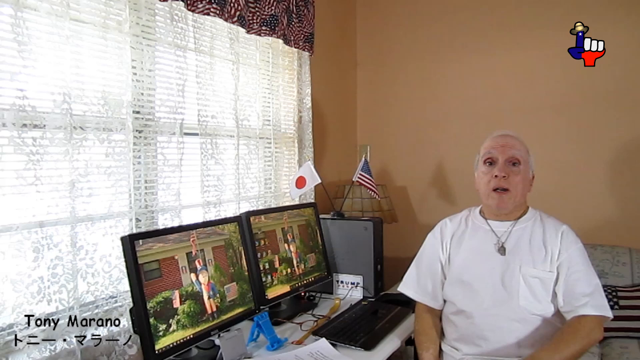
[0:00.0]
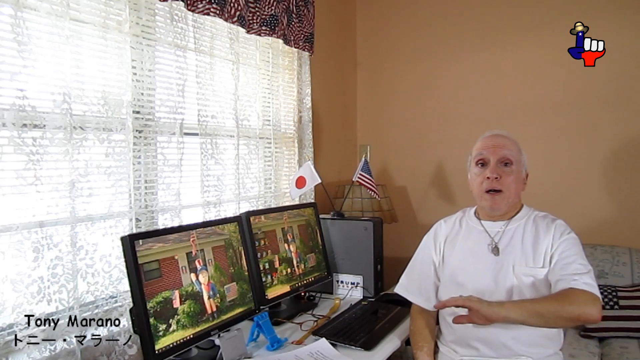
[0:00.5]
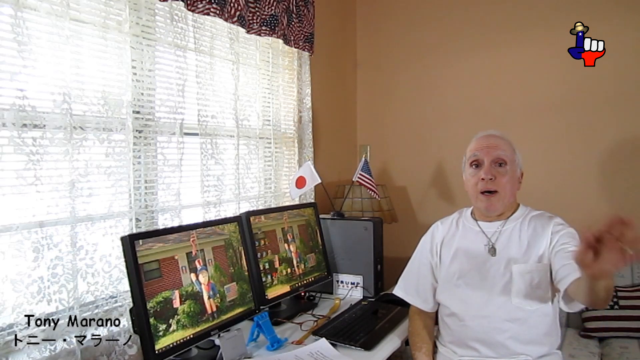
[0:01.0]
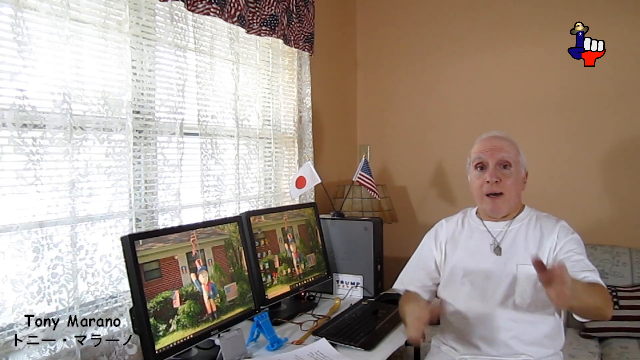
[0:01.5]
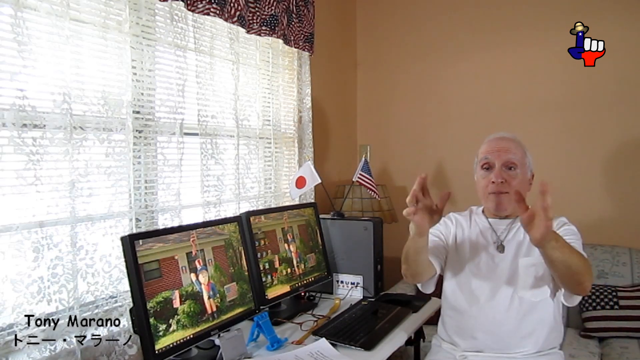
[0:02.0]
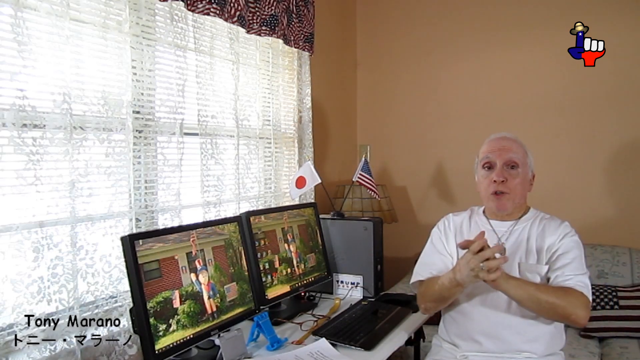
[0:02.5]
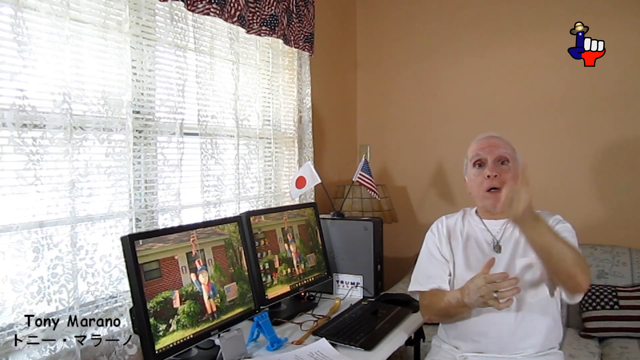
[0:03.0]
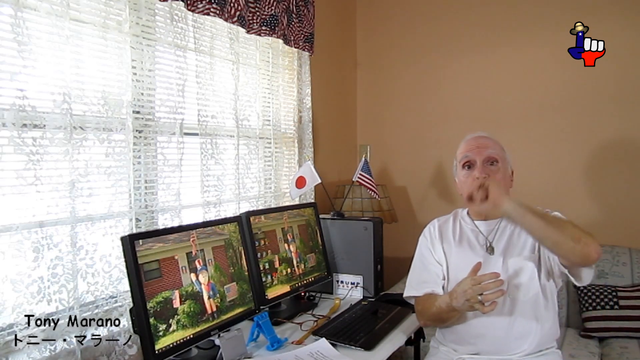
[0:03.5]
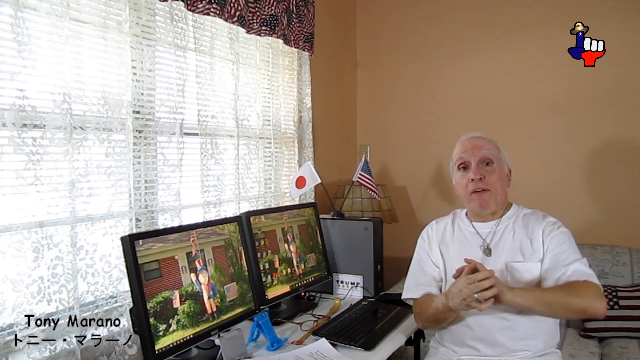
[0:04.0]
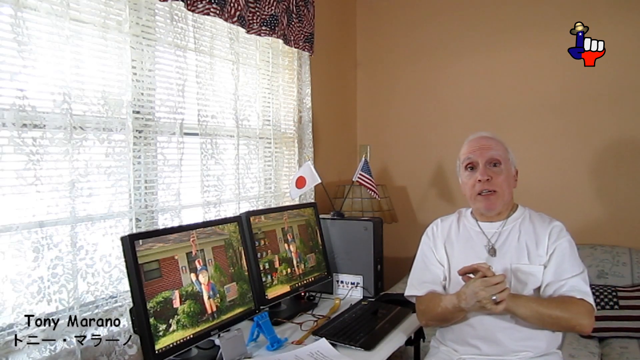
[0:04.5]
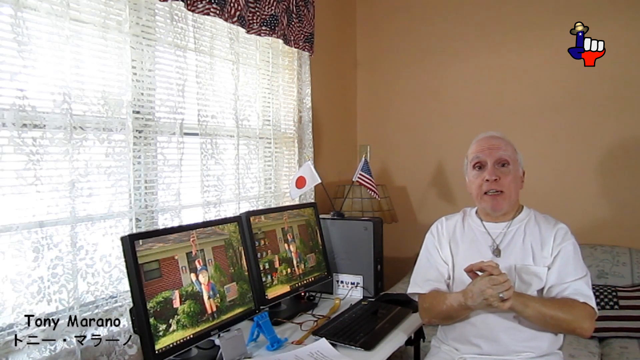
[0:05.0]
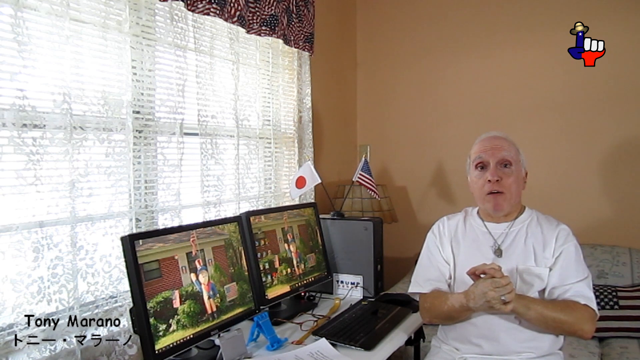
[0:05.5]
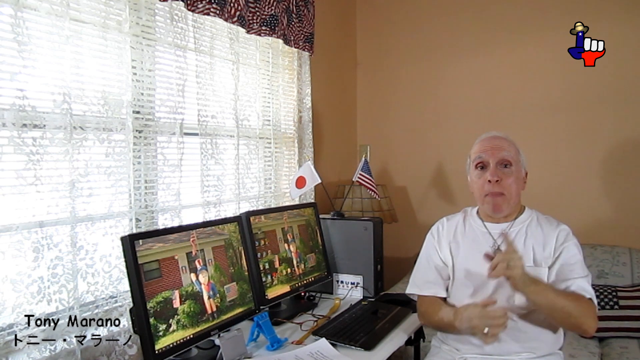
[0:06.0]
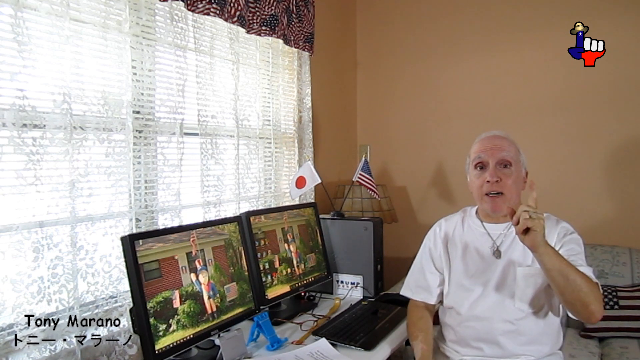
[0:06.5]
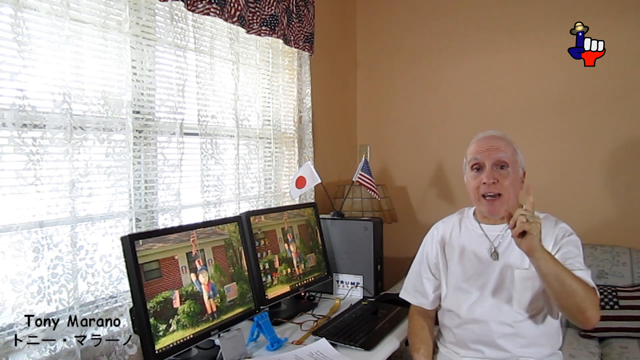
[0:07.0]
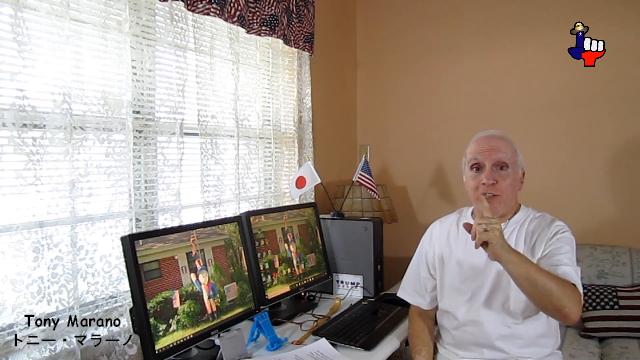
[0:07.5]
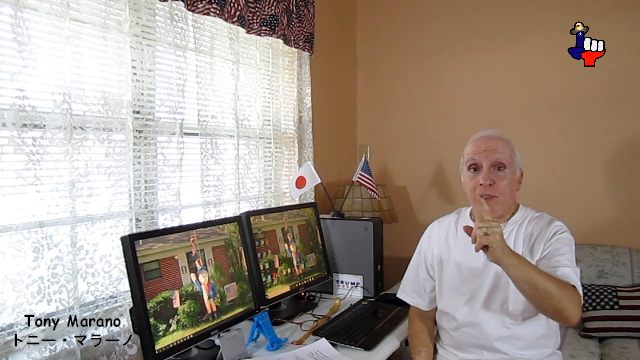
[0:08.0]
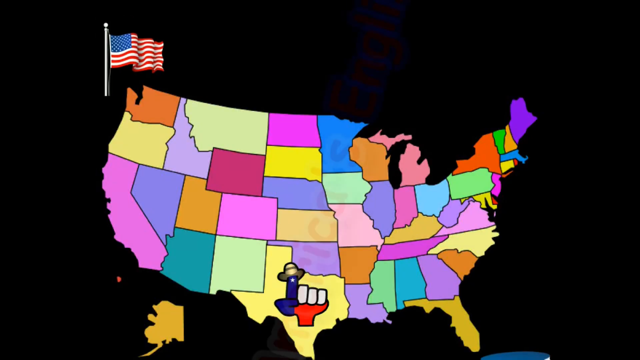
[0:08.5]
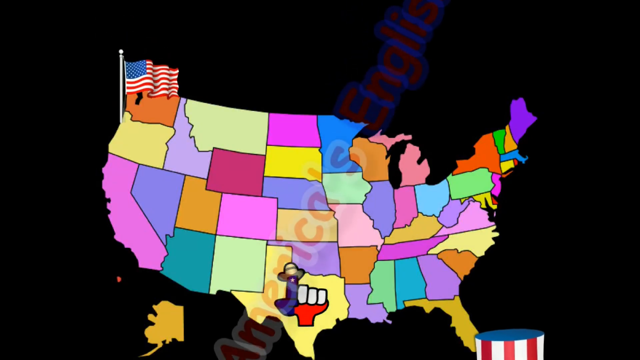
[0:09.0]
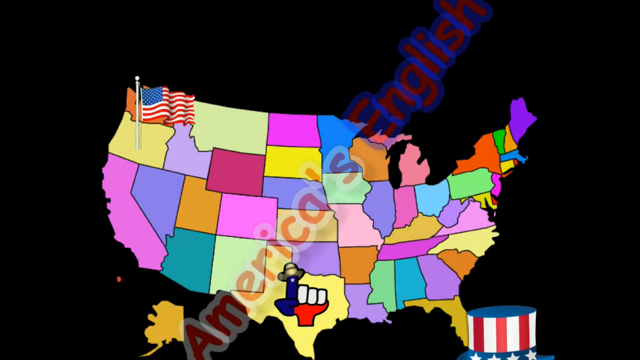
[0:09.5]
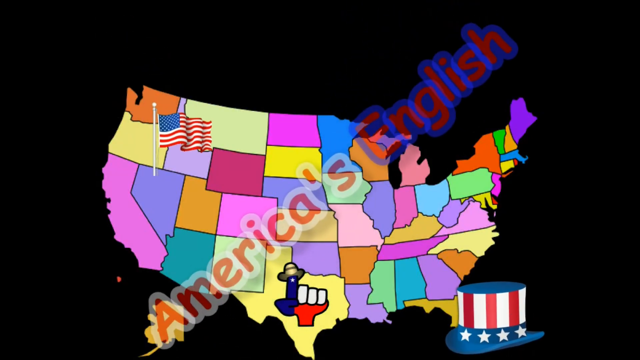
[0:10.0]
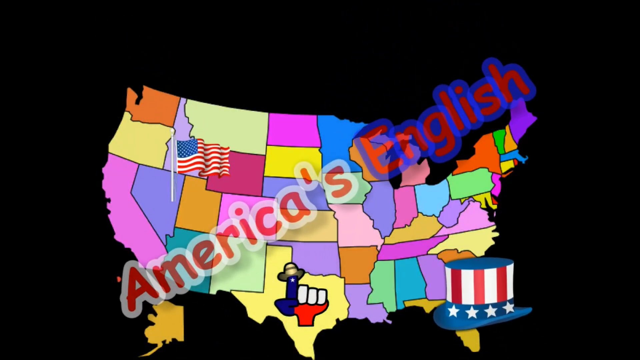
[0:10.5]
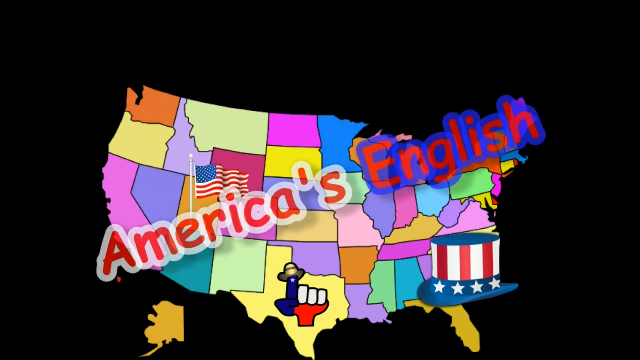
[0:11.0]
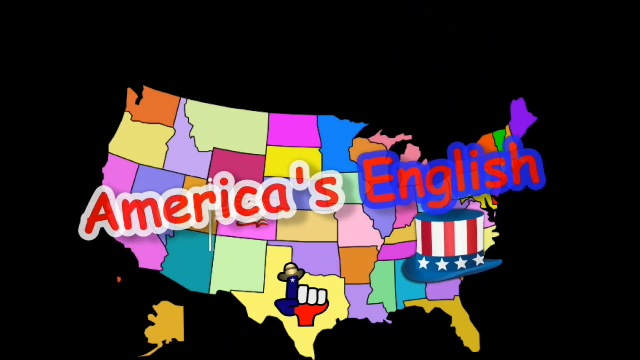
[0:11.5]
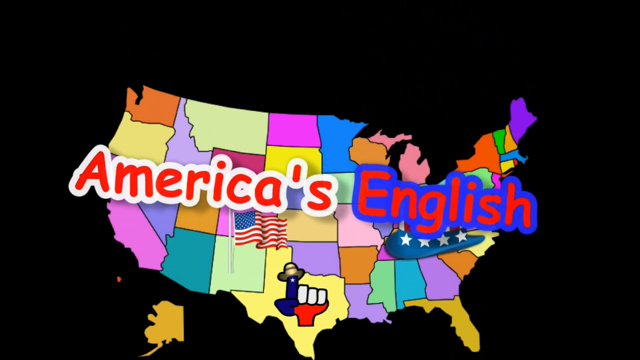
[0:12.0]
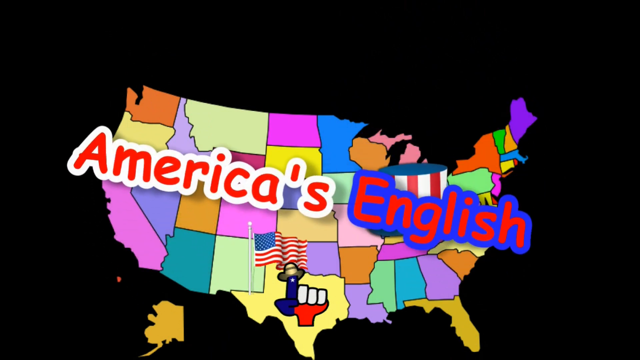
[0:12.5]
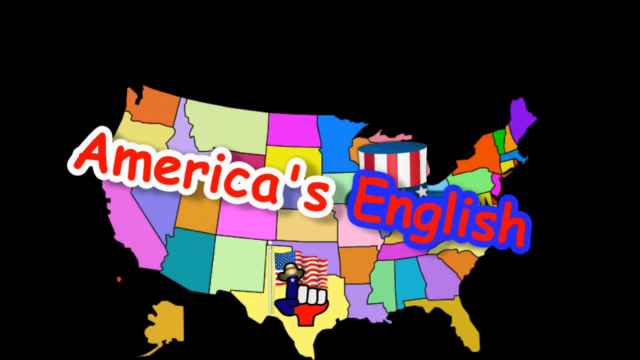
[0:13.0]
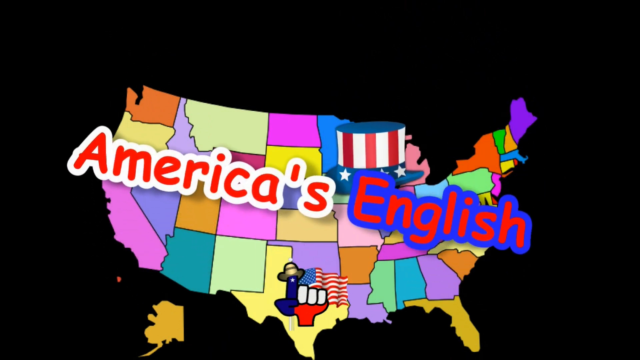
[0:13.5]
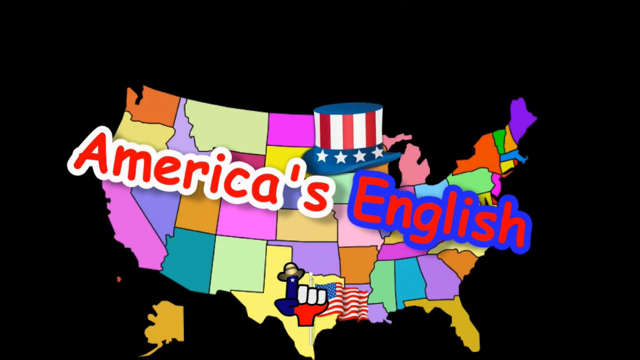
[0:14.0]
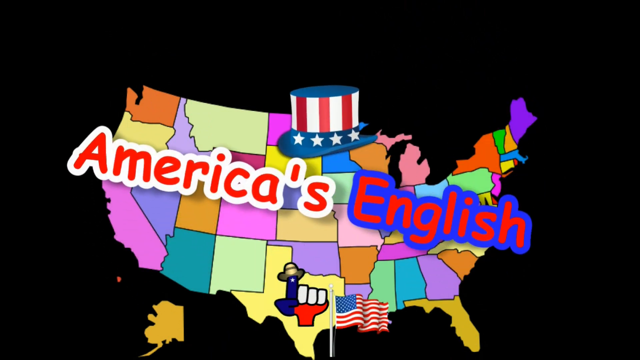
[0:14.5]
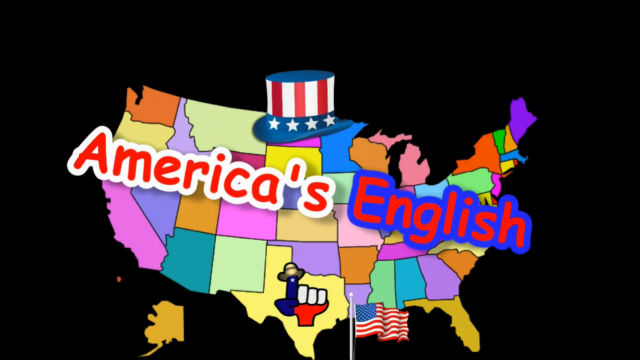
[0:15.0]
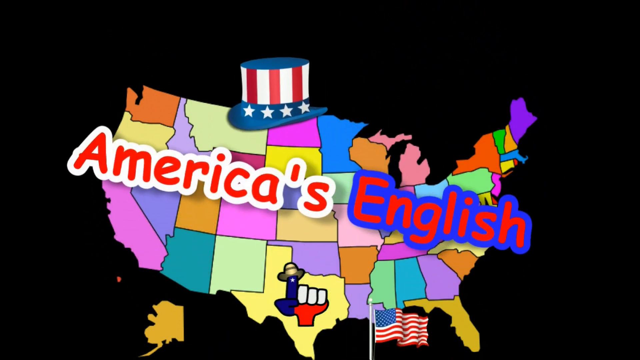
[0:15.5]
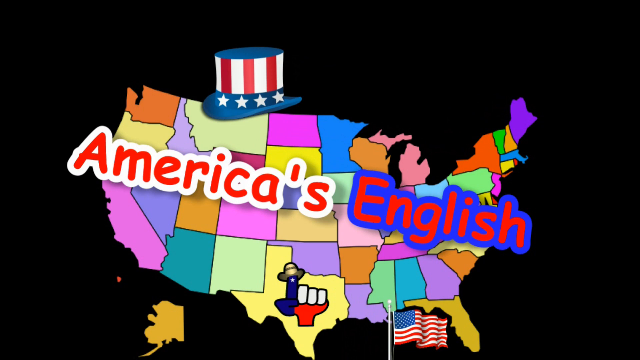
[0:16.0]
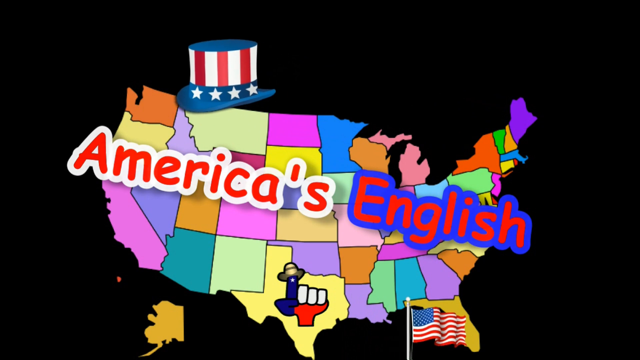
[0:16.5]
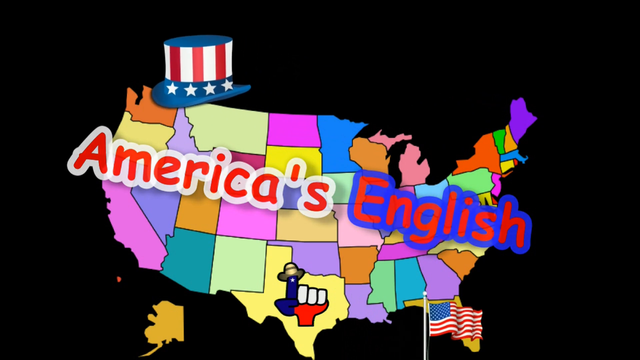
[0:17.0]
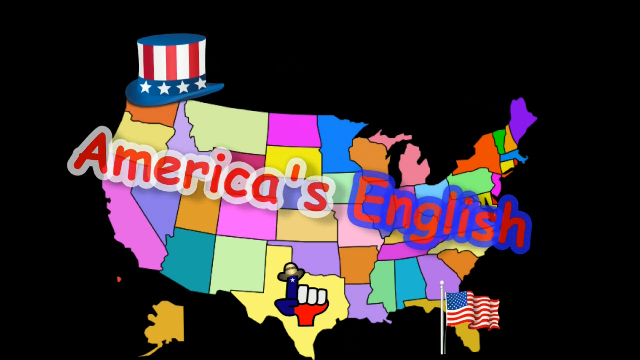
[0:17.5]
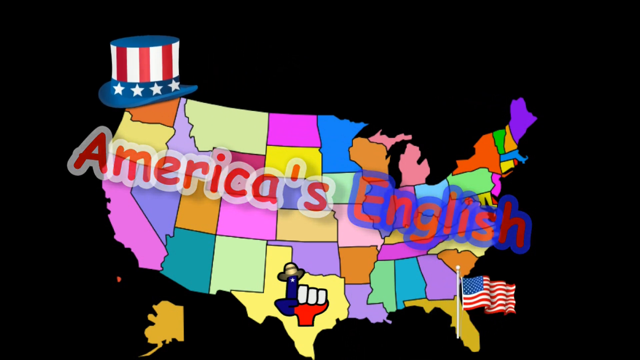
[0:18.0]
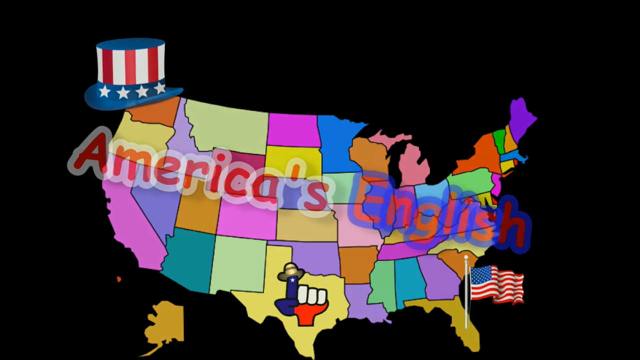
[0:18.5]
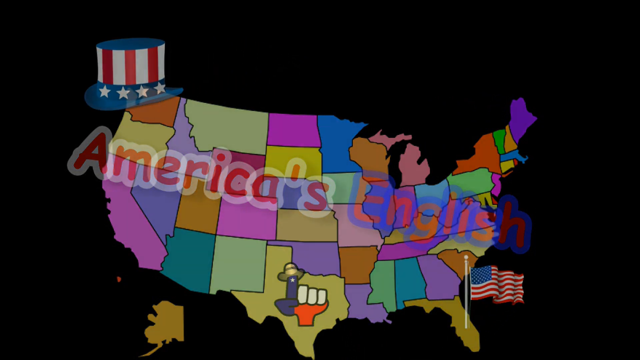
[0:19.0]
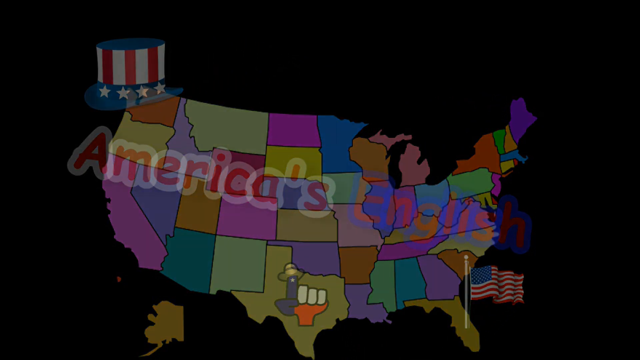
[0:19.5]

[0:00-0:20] An old man sits on the right side of the screen, speaking directly to the camera. He has gray hair and wears a short-sleeved white shirt and a necklace with a big charm on it. To his right is a white desk with two desktop computers side by side on it, and a keyboard in front of one of them. To the right of both is a black desktop tower with two small flags on top: an American flag and a China flag. Behind the desktops is a large picture window with an open shade and see-through white curtains over it. In the bottom left-hand corner, black text reads "Tony Marano." Behind the man is a solid light brown wall.